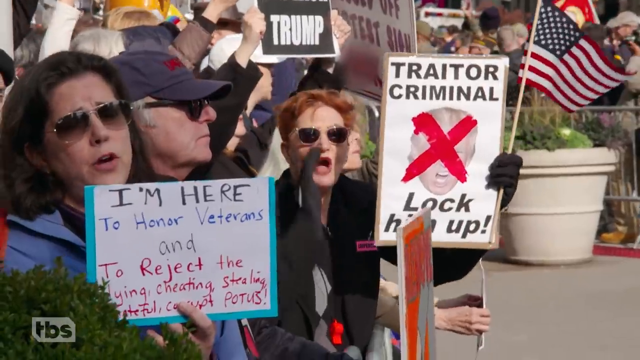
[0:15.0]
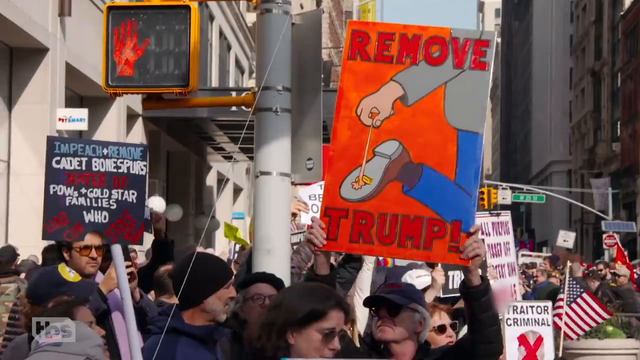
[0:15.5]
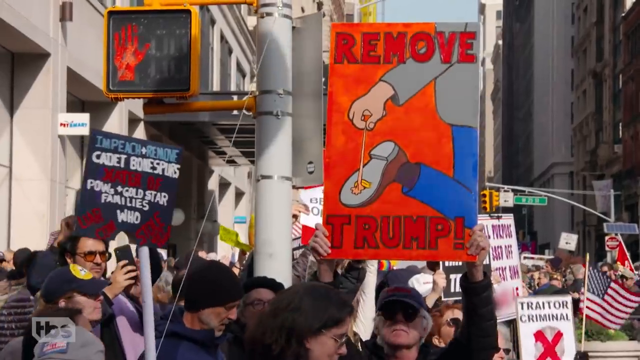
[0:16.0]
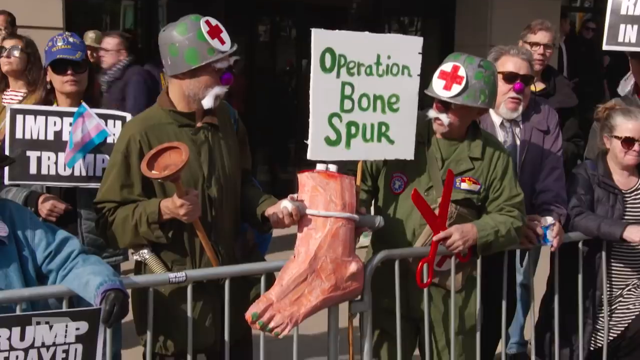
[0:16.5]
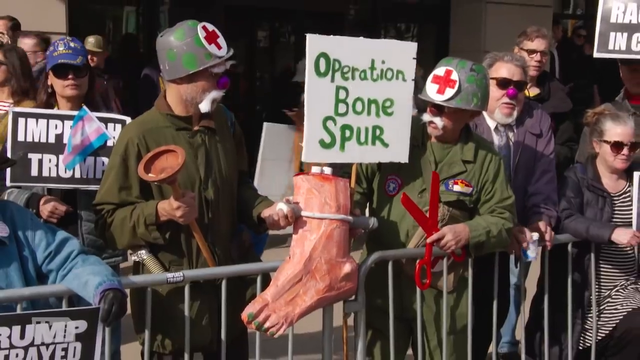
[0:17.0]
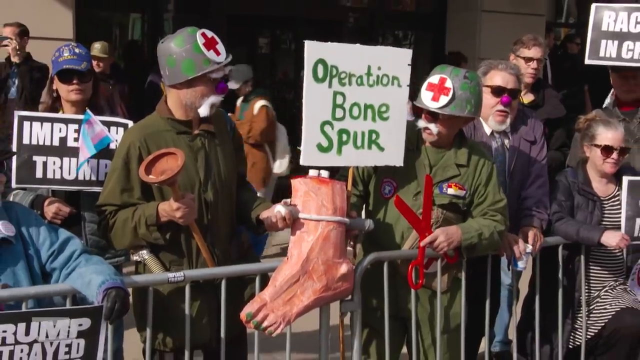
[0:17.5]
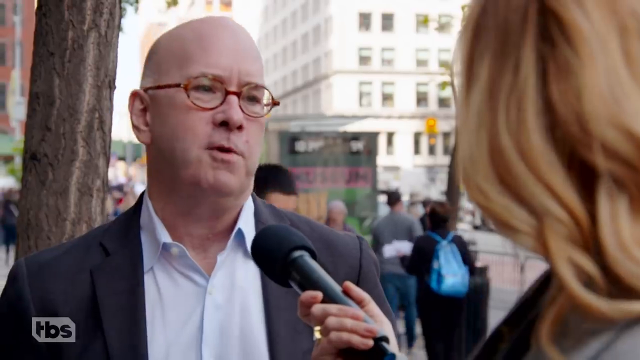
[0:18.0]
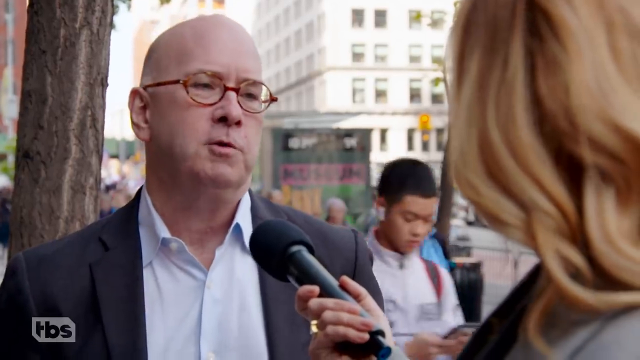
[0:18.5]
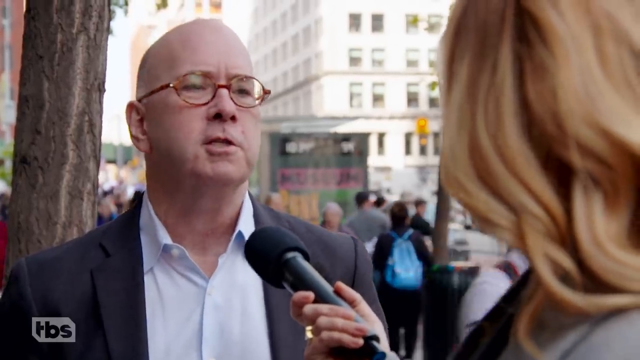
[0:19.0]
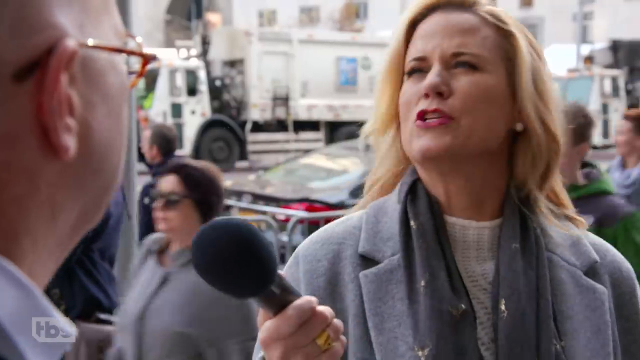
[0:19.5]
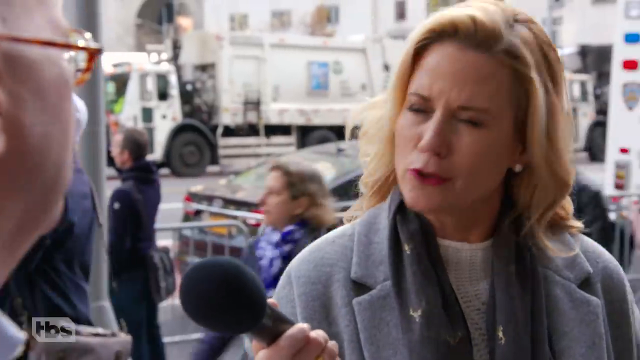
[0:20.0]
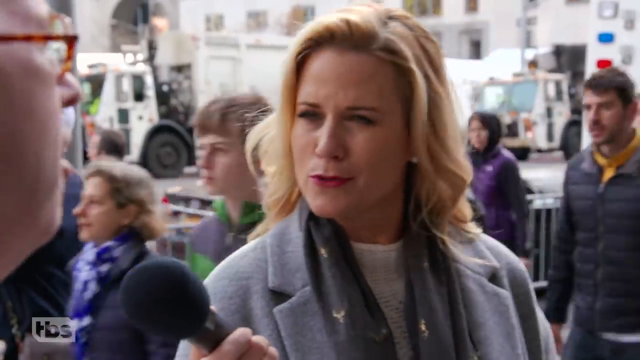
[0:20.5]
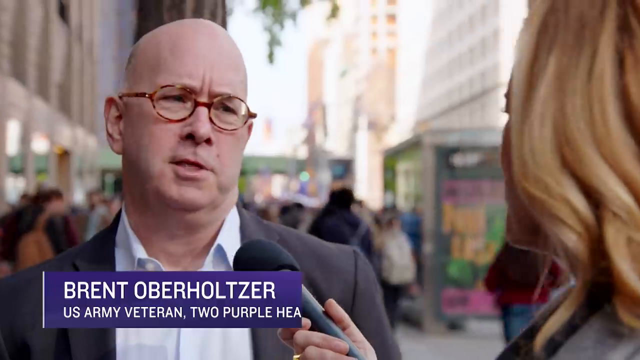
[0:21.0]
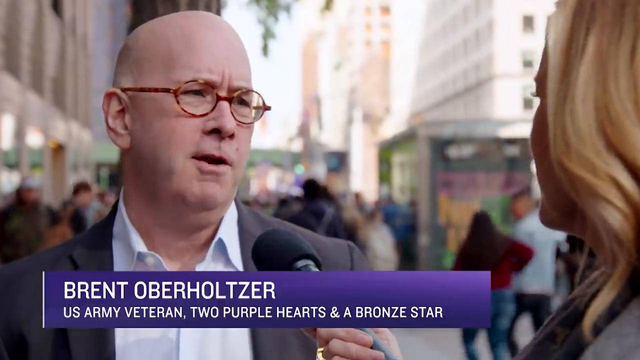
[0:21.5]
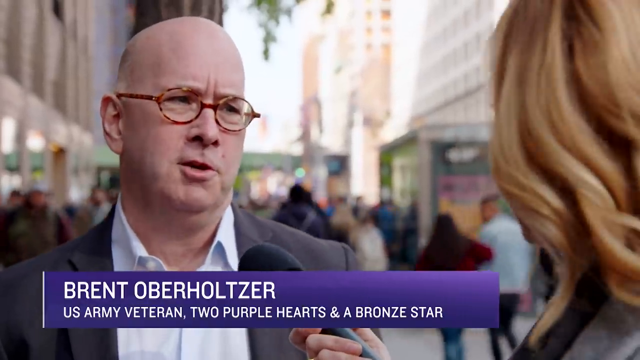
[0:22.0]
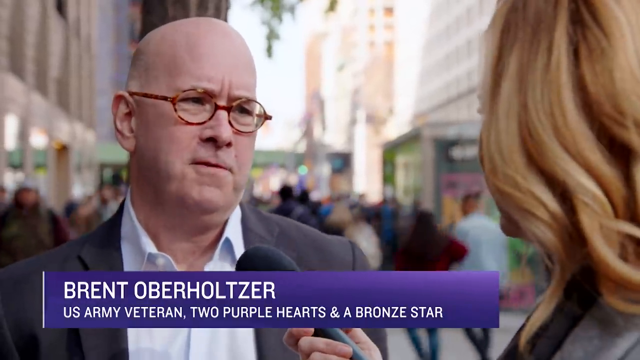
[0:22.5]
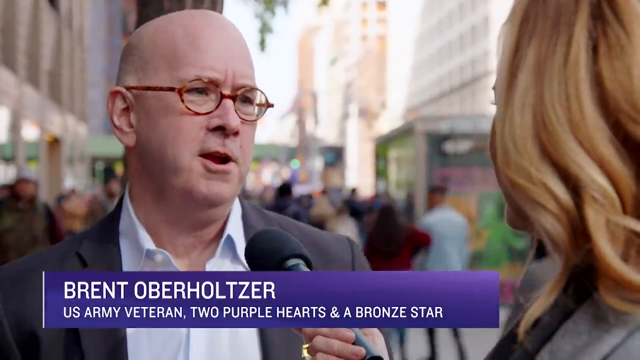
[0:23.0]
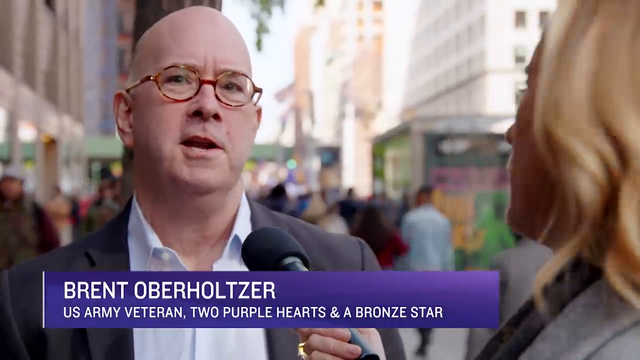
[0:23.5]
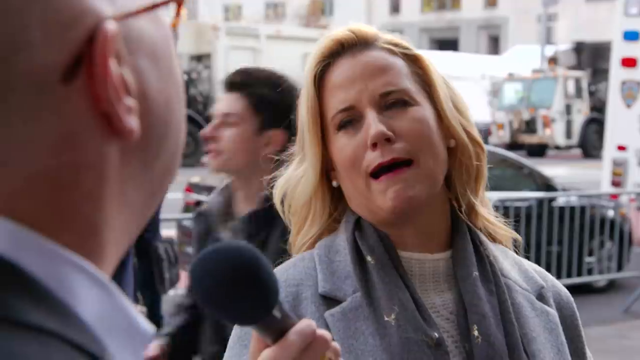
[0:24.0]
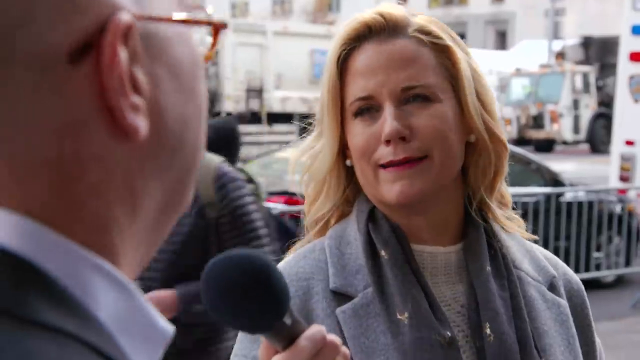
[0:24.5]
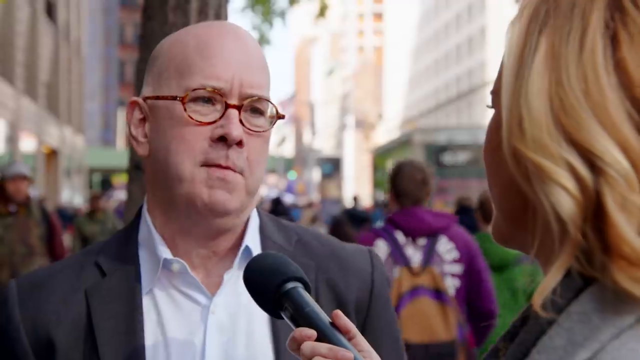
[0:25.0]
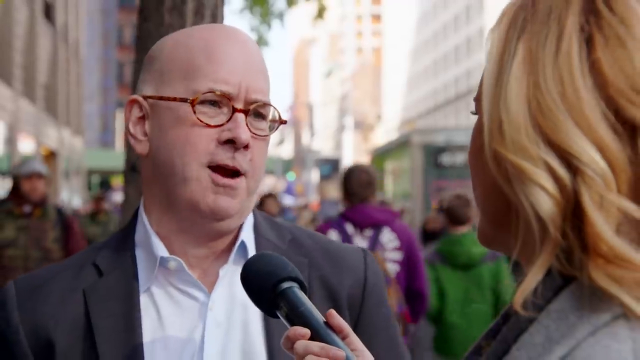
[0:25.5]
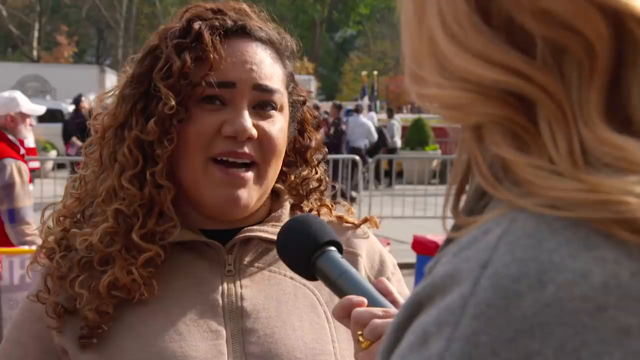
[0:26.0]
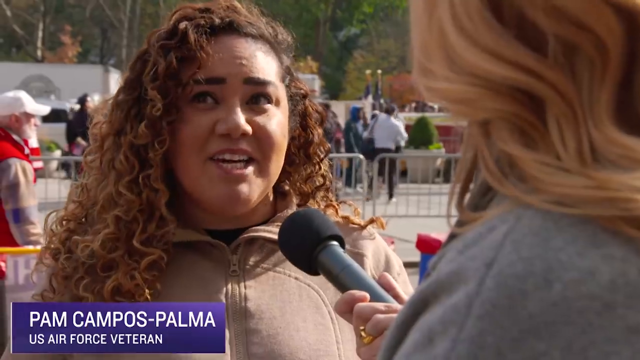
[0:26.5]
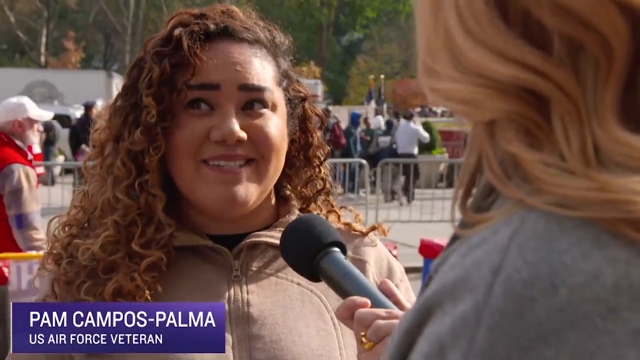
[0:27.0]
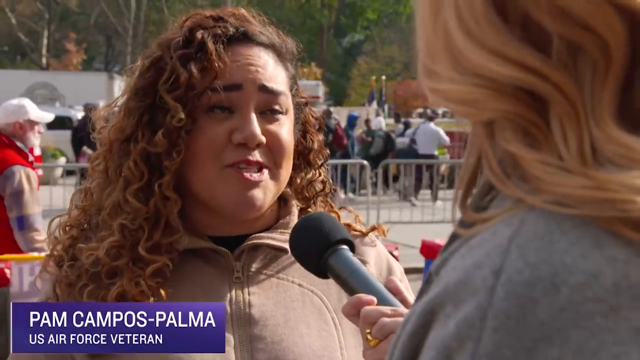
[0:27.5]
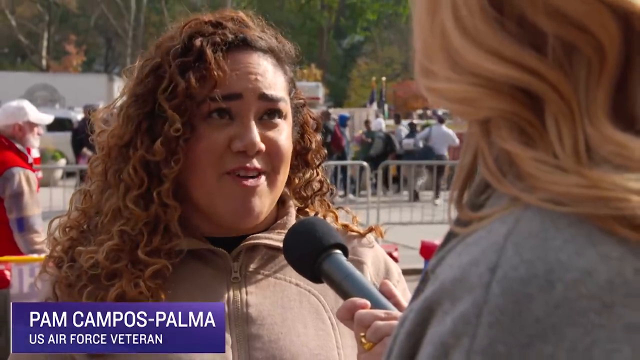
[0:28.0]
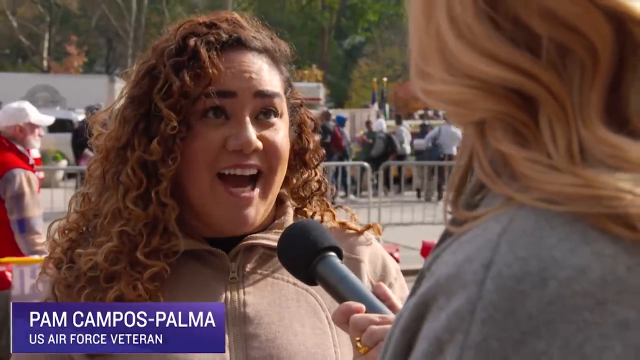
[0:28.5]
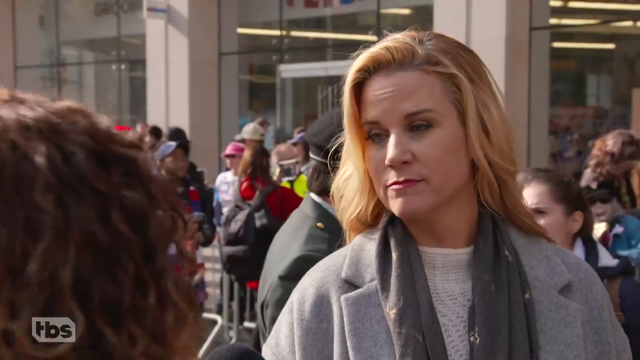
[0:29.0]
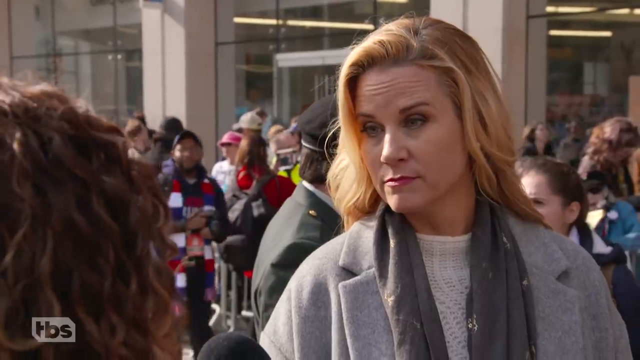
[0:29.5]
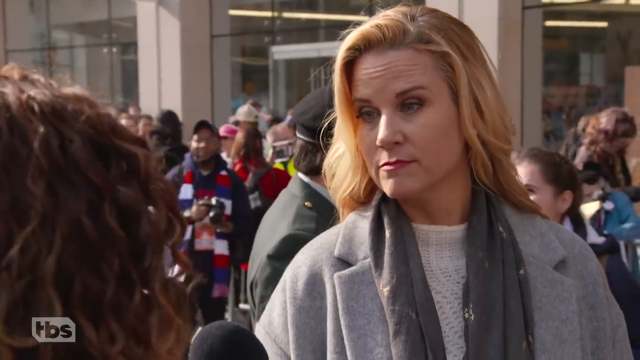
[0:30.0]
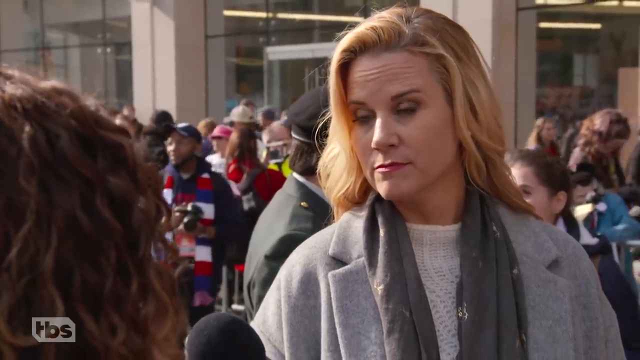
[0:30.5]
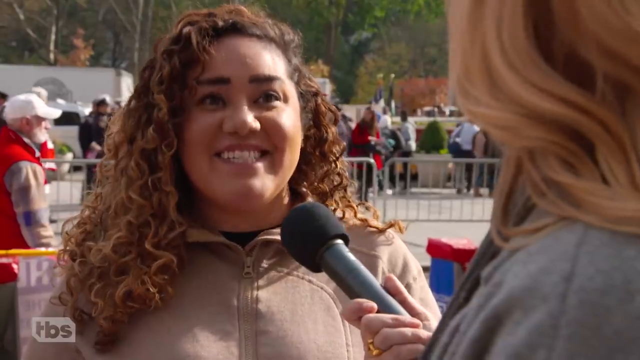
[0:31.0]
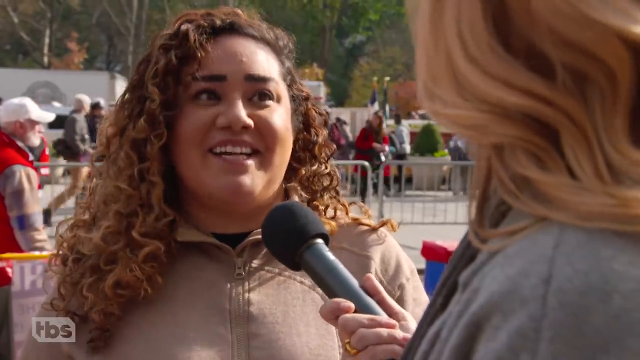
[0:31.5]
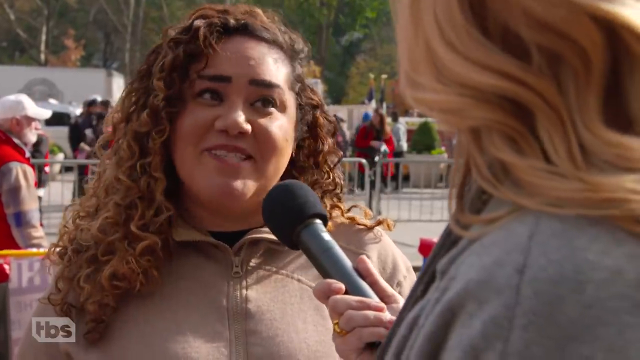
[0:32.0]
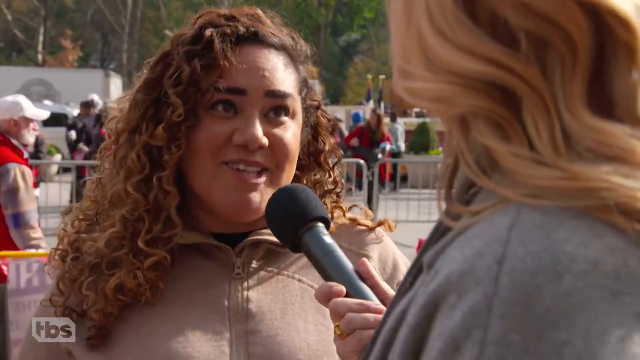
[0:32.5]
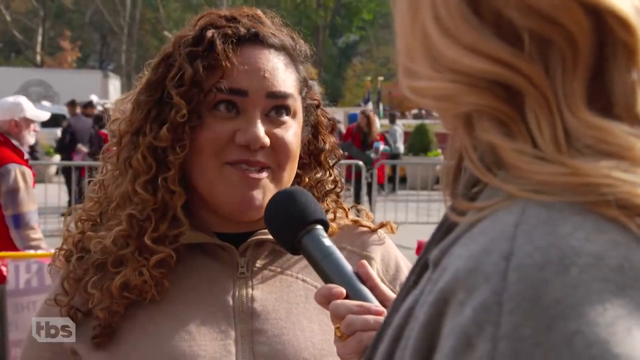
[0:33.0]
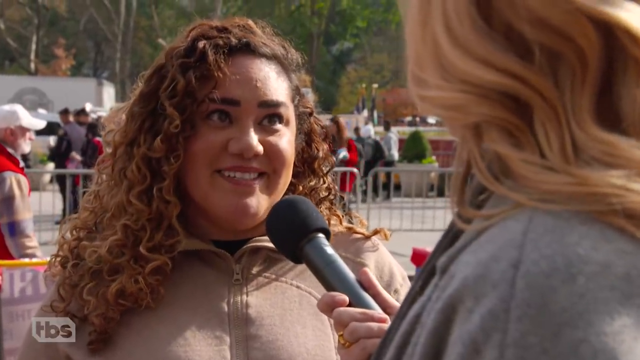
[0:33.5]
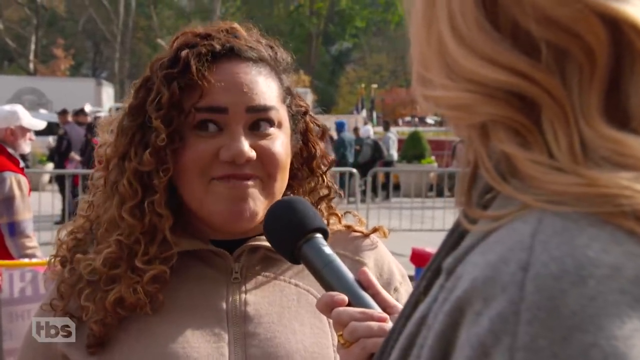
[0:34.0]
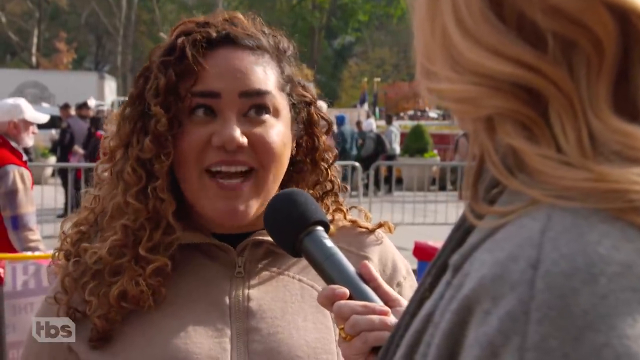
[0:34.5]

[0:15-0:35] Different segments of the news feature continue. At the start, signs are shown very quickly, with people apparently protesting with different signs and apparatuses against Donald Trump; one sign clearly reads "Impeach Trump" and another reads "Operation Bone Spur." A bit of the parade is shown, and then a man is interviewed with a microphone by a woman. Superimposed text gives his name as "Brent Oberholzer, U.S. Army veteran, two purple hearts and a bronze star," and he speaks to the interviewer. The video then switches to a woman being interviewed by the same reporter; her name appears as "Pam Campos-Palma" with "U.S. Air Force veteran," and she is animated as she gives her interview. The title reads "will Trump get booed, veterans edition."